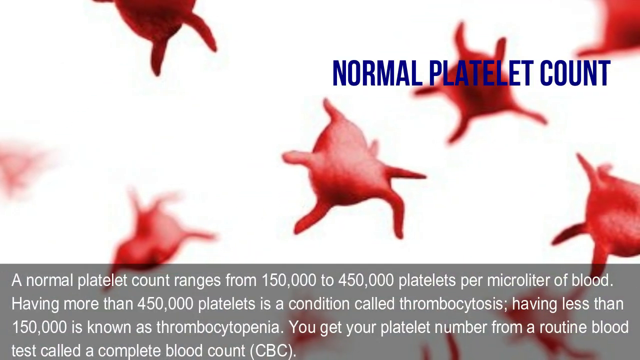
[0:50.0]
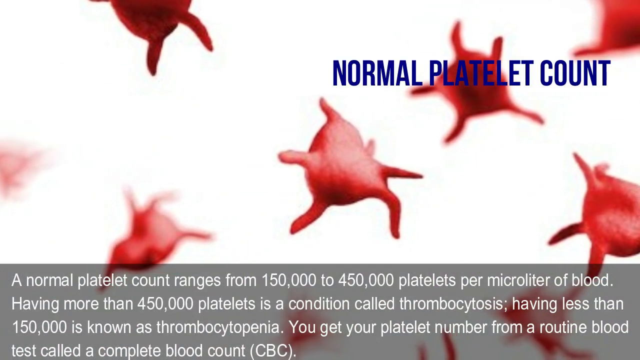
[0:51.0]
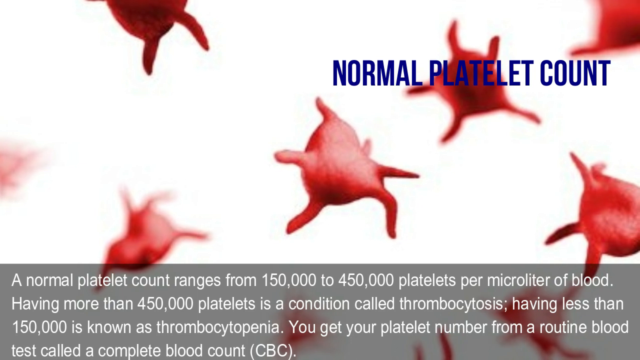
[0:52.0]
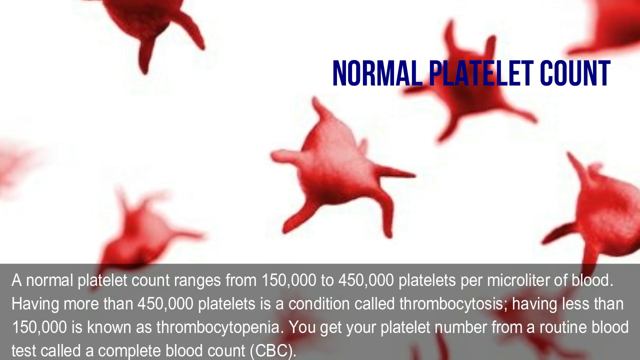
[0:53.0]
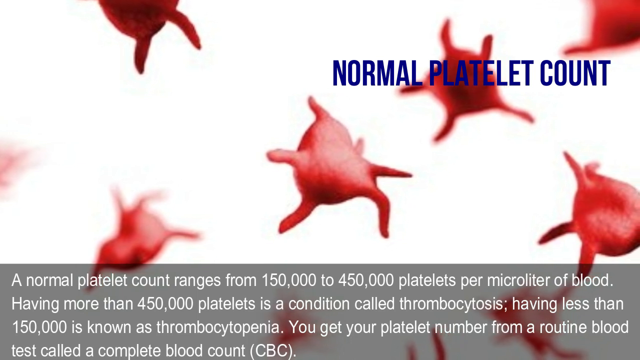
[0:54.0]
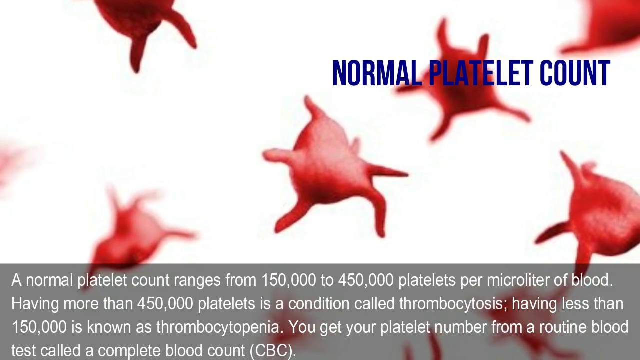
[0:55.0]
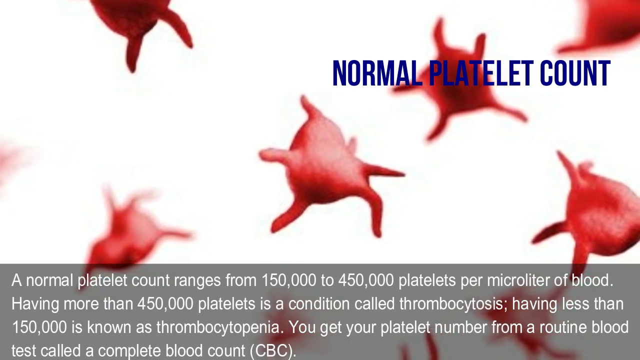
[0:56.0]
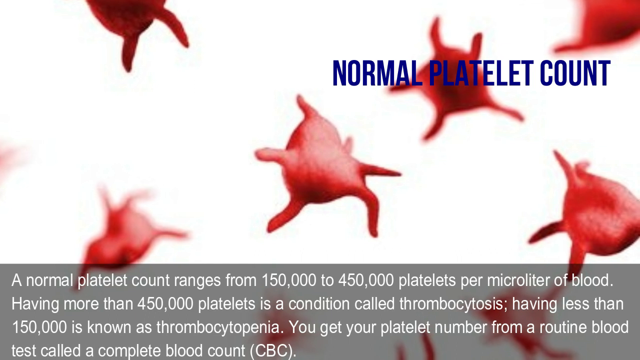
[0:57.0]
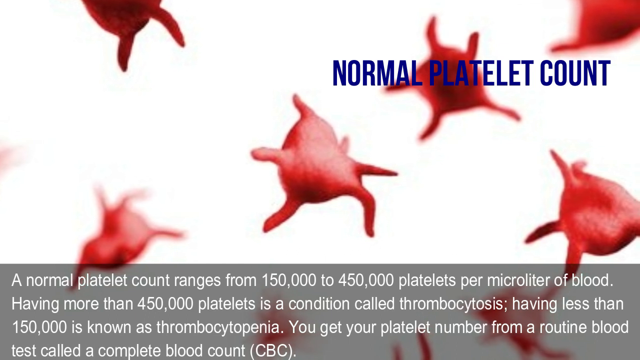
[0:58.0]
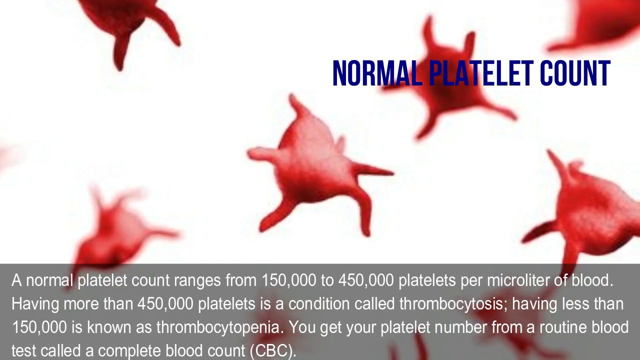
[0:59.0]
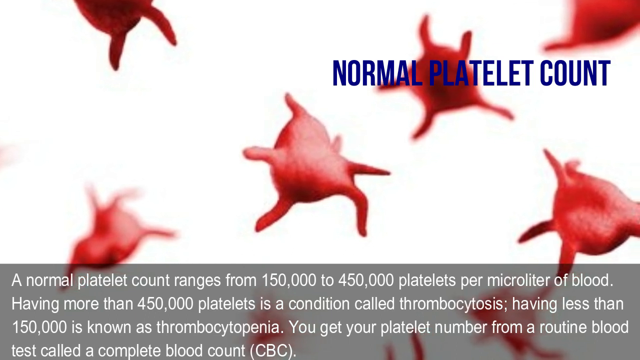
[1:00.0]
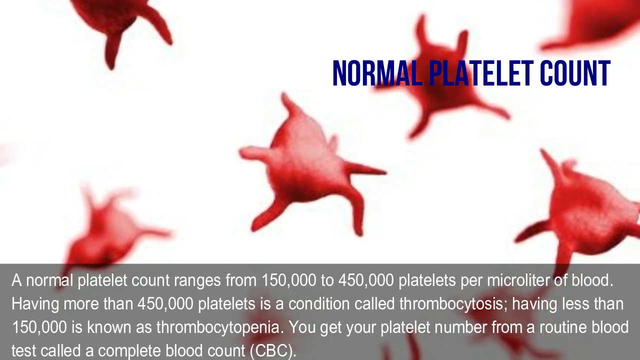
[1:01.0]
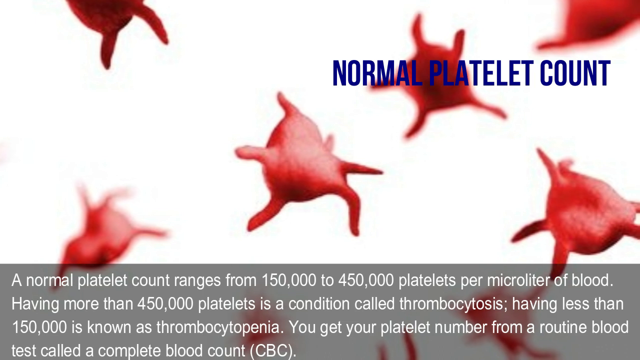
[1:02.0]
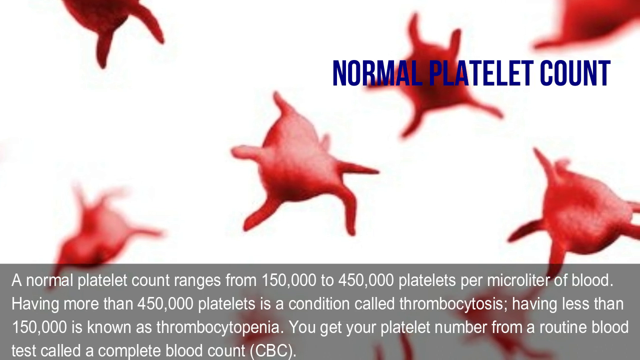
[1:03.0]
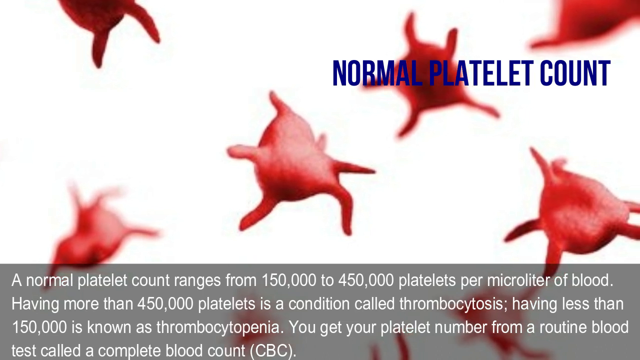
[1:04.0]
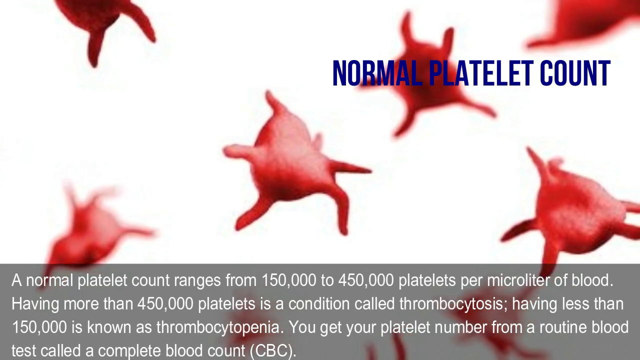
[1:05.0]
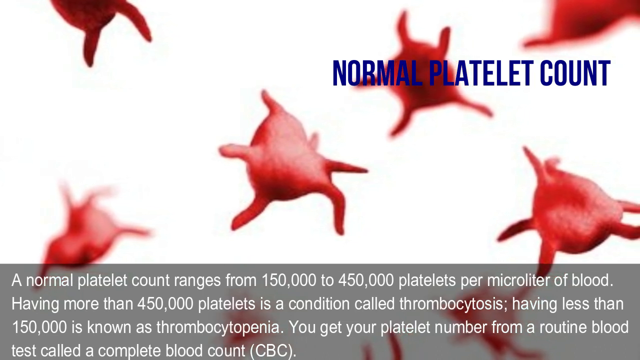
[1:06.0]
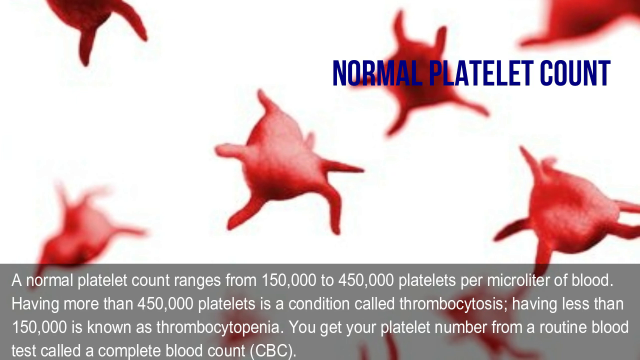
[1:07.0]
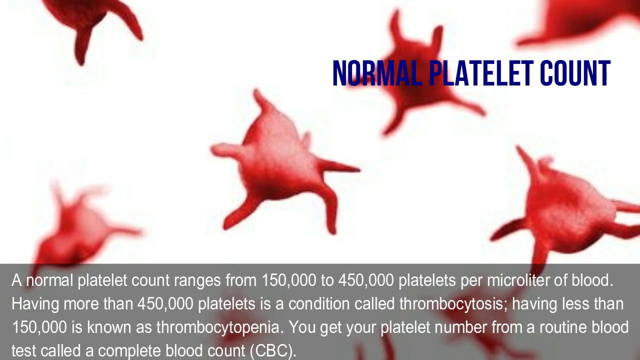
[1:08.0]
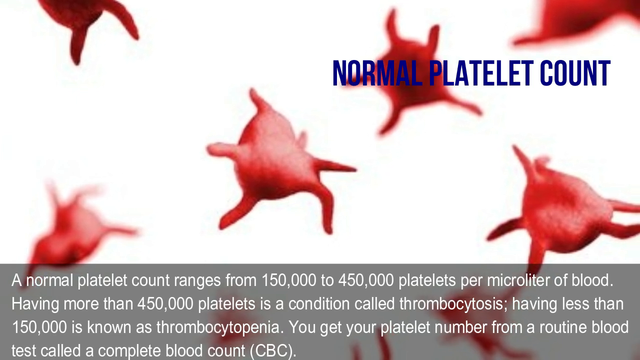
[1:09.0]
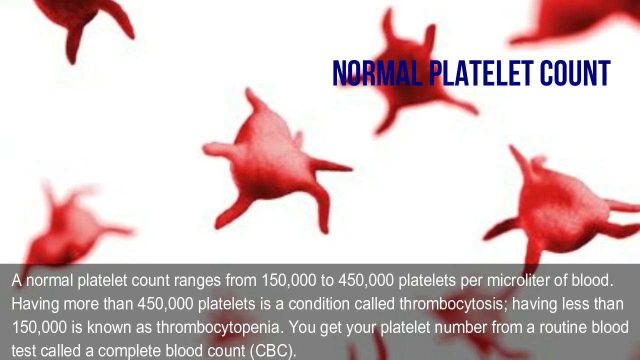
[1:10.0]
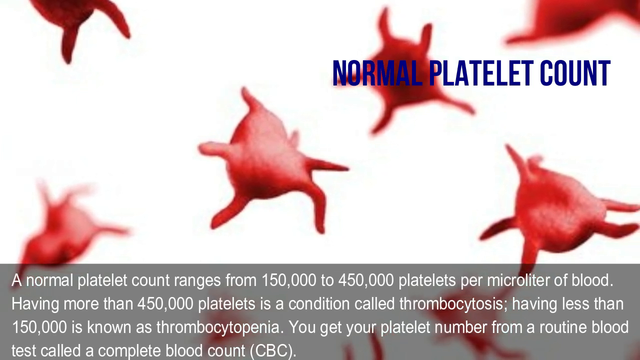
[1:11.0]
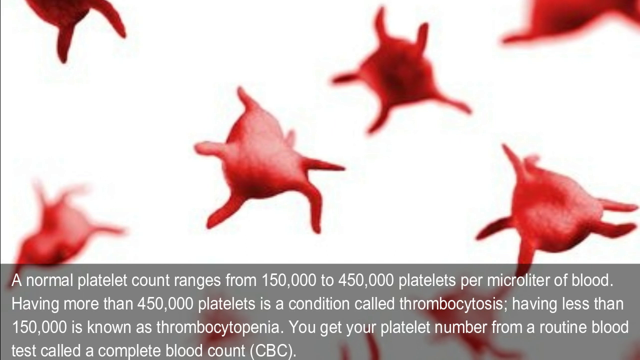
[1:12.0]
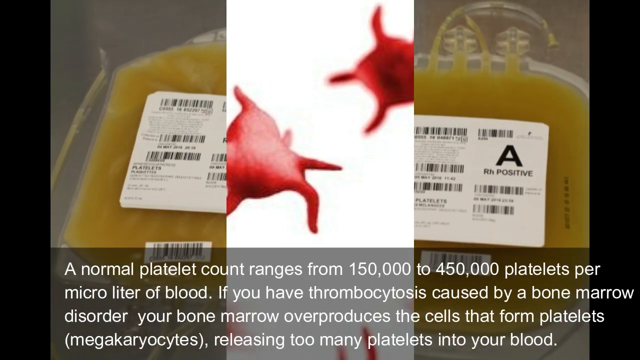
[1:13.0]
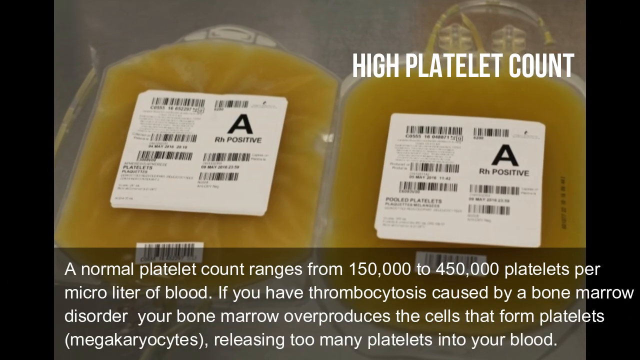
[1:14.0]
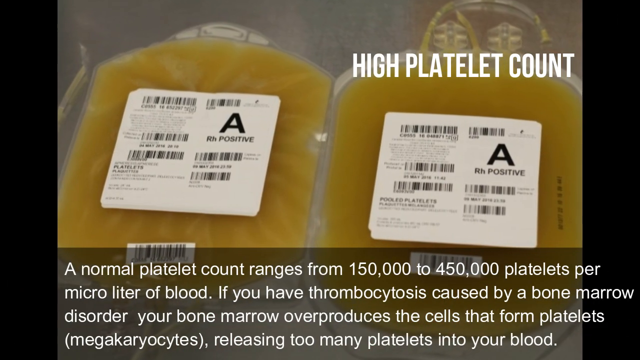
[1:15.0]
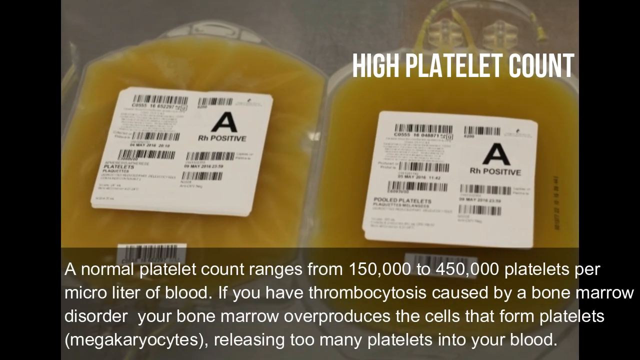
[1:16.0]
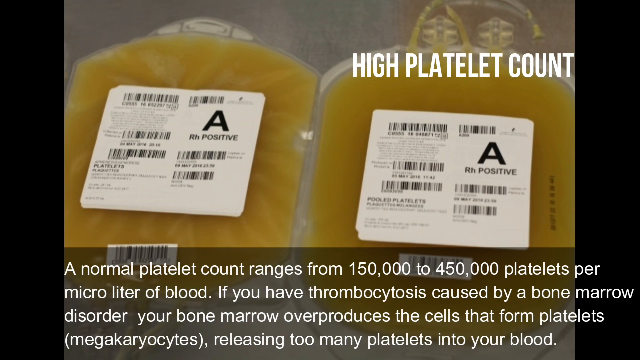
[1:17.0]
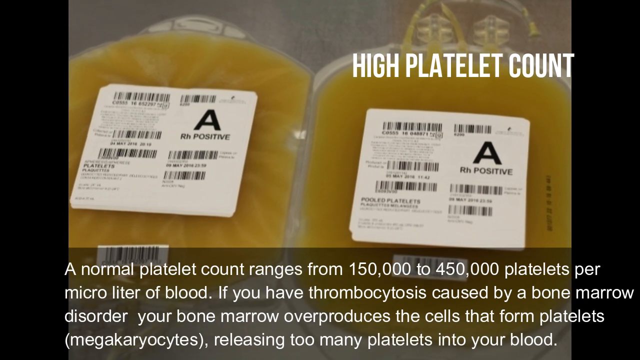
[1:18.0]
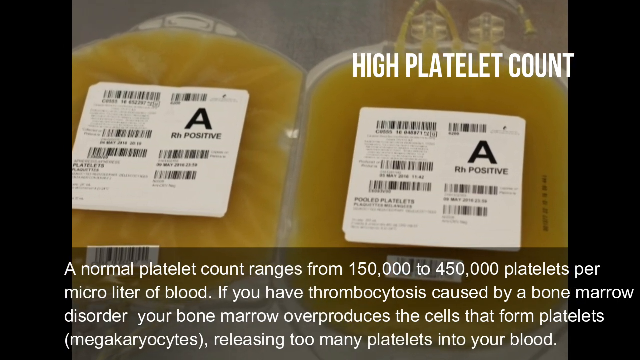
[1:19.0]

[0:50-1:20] The words "normal platelet count" appear with red objects floating around against a white background. The words at the bottom of the screen, against a translucent gray background, read: "a normal platelet count ranges from 150,000 to 450,000 platelets per microliter of blood. Having more than 450,000 platelets is a condition called thrombocytosis. Having less than 150,000 is known as thrombocytopenia. You get your platelet number from a routine blood test called a complete blood count CBC." The next screen says "high platelet count" in white letters, and the words at the bottom read: "a normal platelet count ranges from 150,000 to 450,000 platelets per microliter of blood. If you have thrombocytosis caused by a bone marrow disorder, your bone marrow overproduces the cells that form platelets, megakaryocytes releasing too many platelets into your blood." The video is primarily a slideshow or presentation-style video.